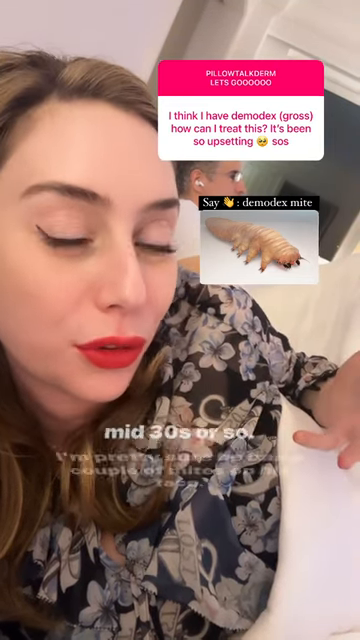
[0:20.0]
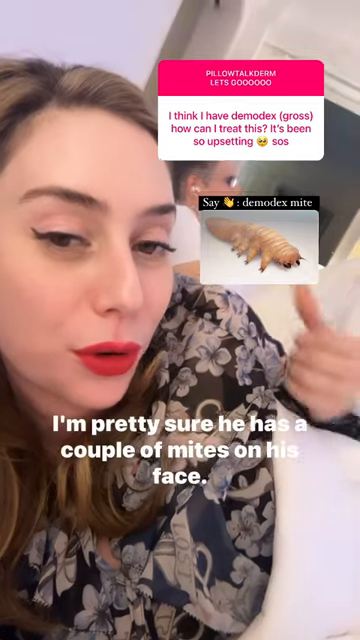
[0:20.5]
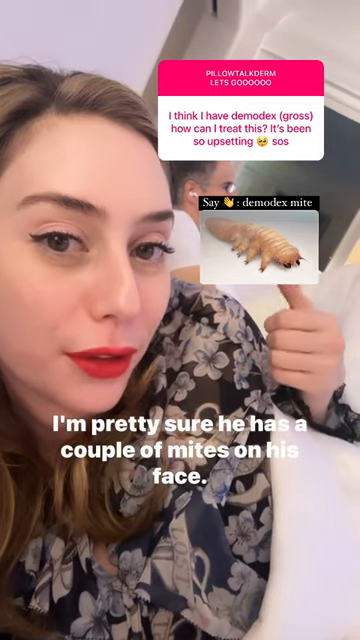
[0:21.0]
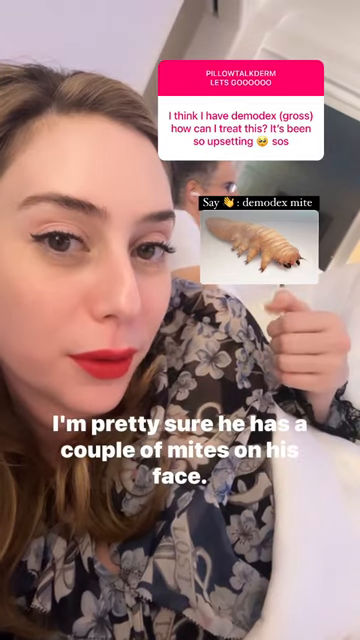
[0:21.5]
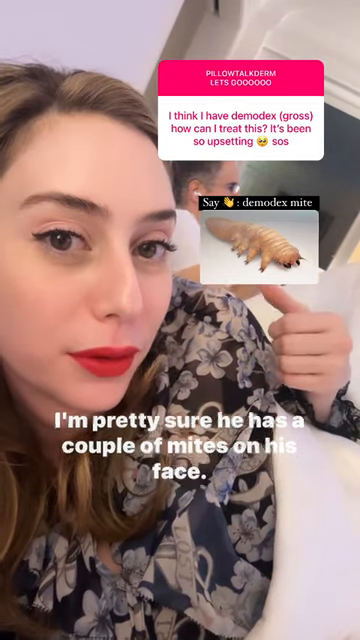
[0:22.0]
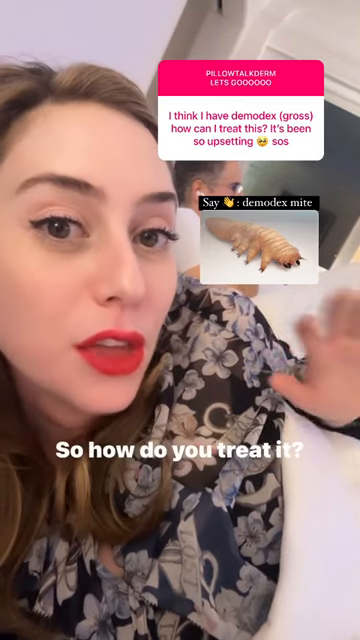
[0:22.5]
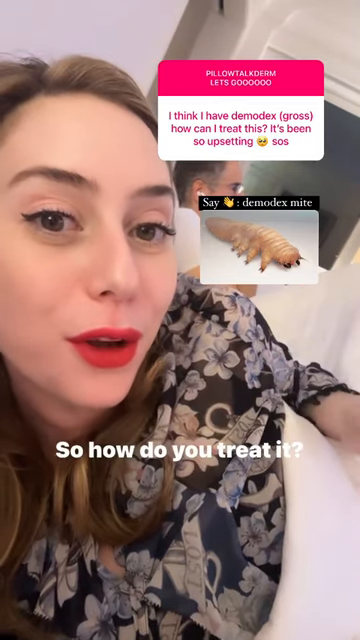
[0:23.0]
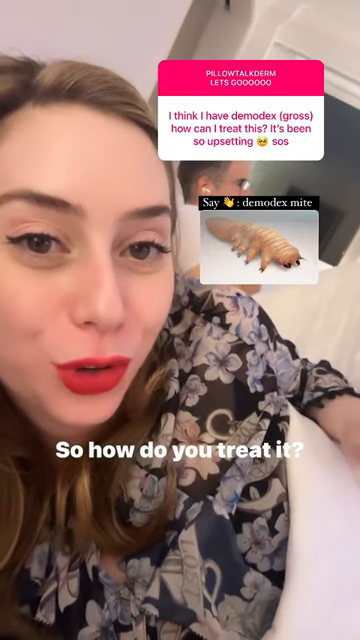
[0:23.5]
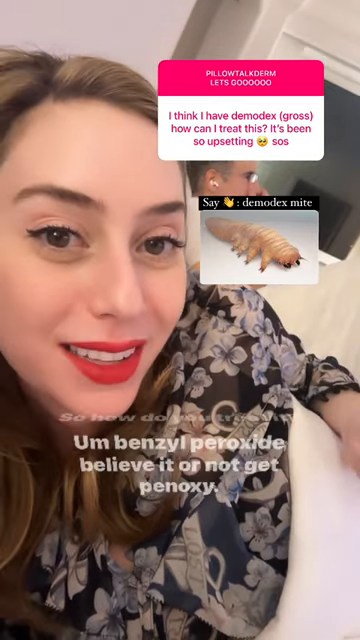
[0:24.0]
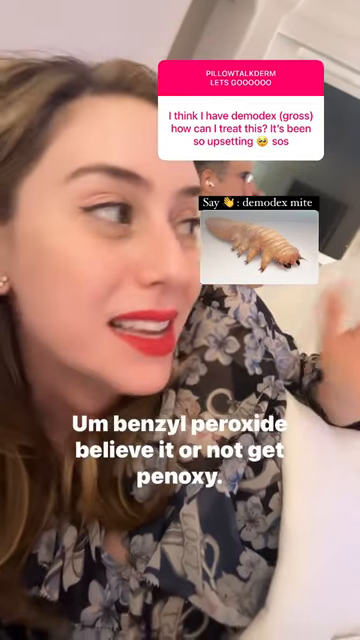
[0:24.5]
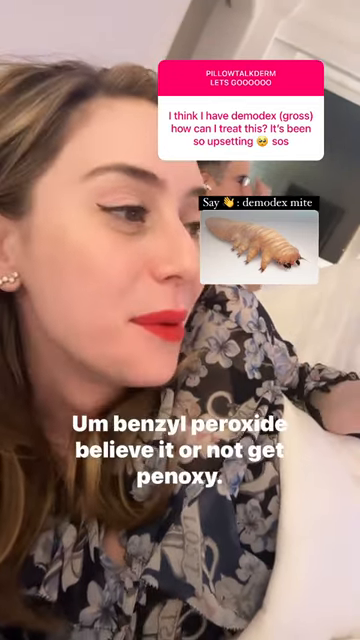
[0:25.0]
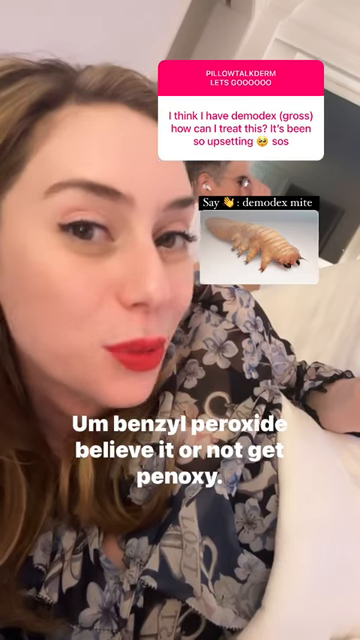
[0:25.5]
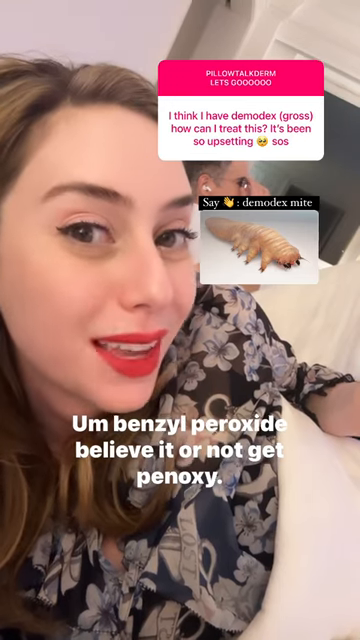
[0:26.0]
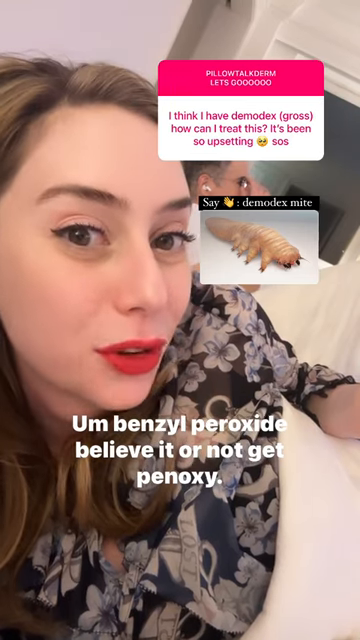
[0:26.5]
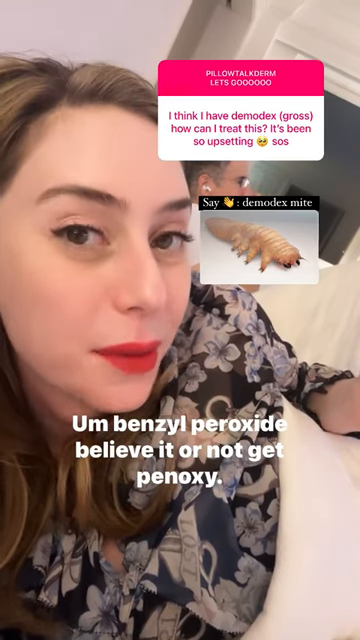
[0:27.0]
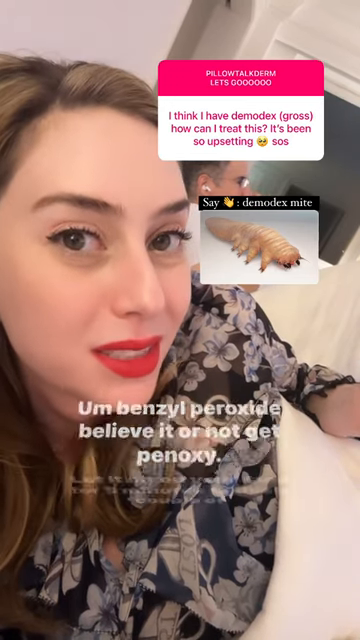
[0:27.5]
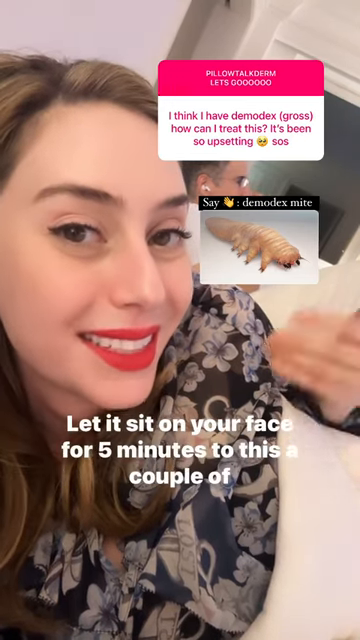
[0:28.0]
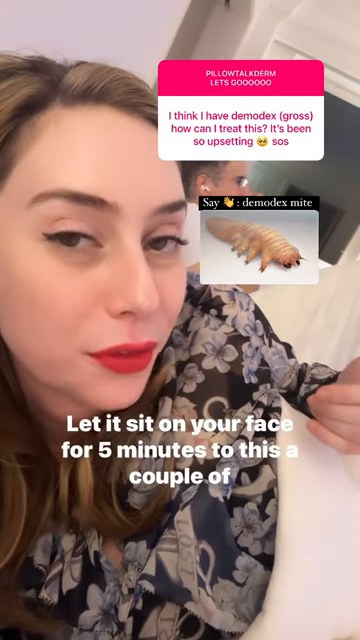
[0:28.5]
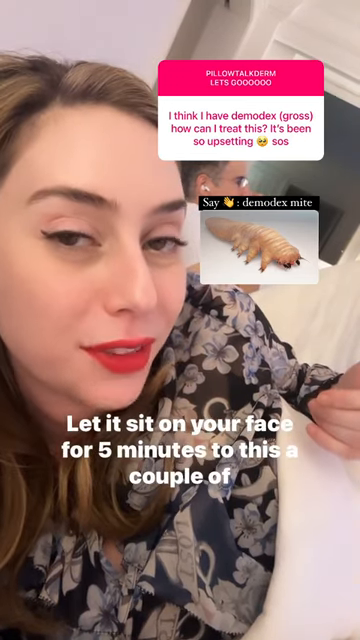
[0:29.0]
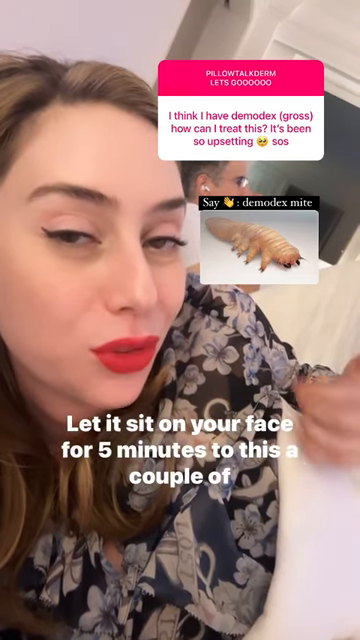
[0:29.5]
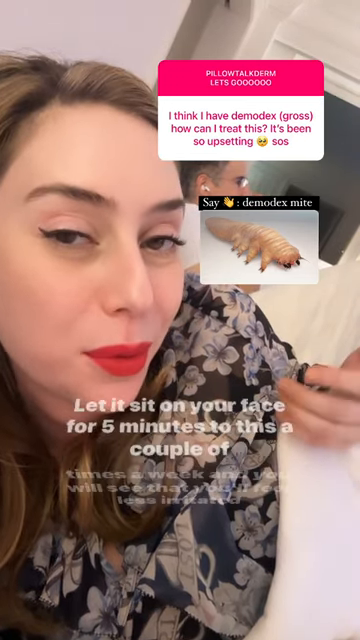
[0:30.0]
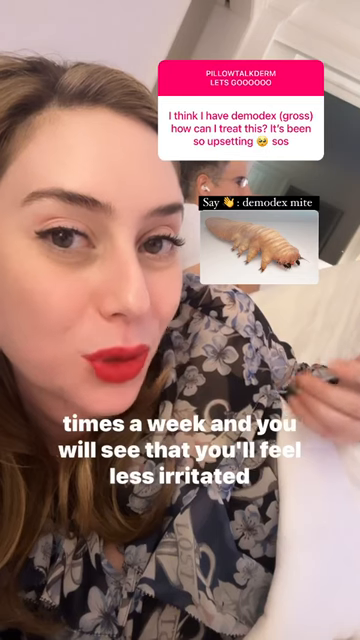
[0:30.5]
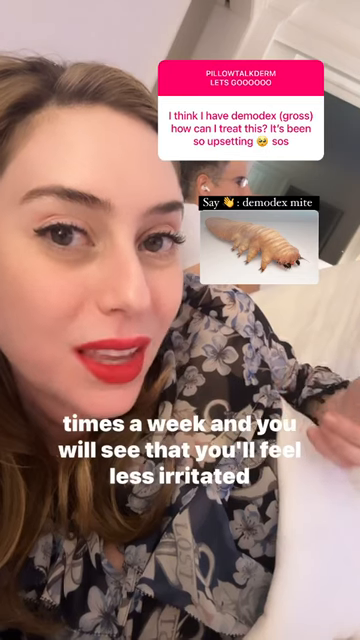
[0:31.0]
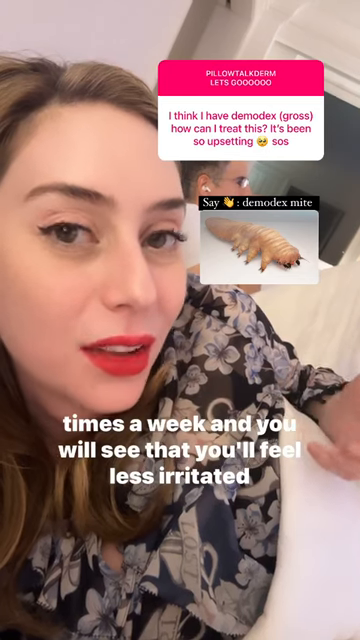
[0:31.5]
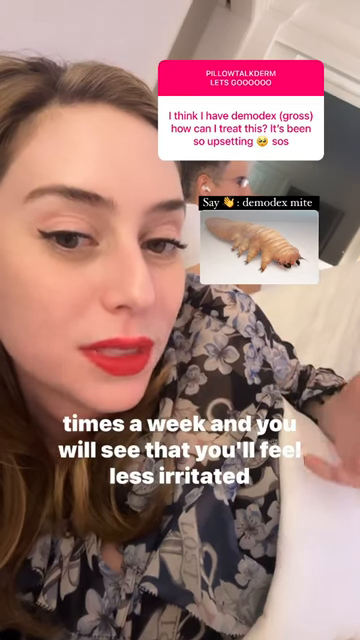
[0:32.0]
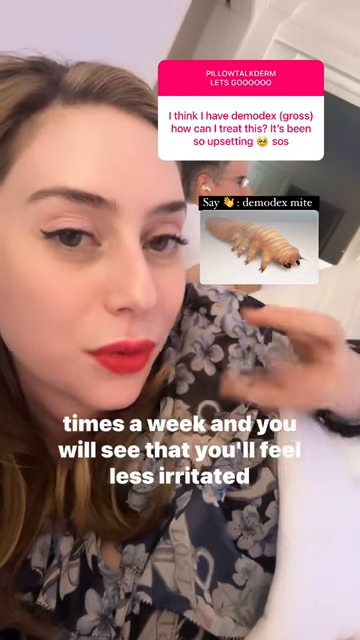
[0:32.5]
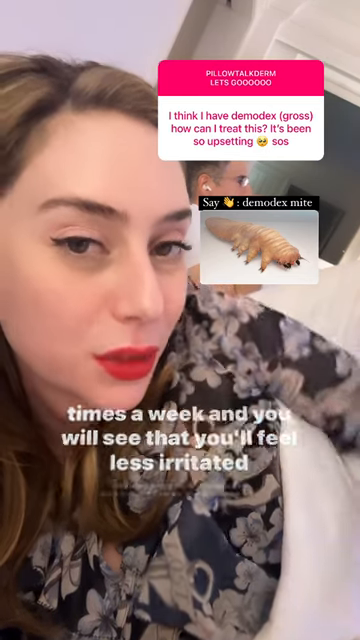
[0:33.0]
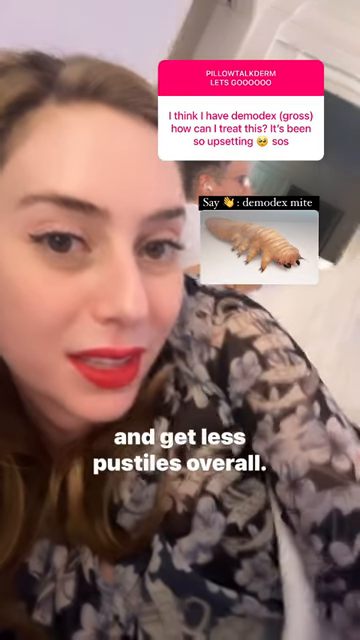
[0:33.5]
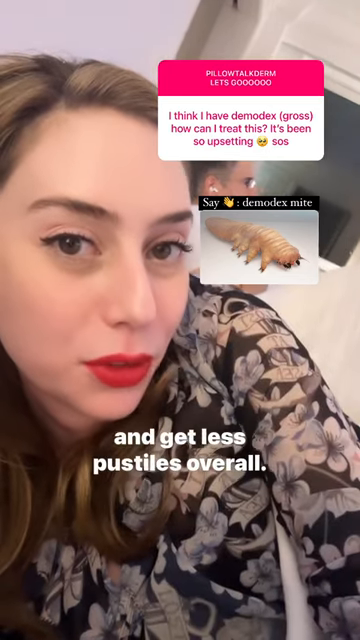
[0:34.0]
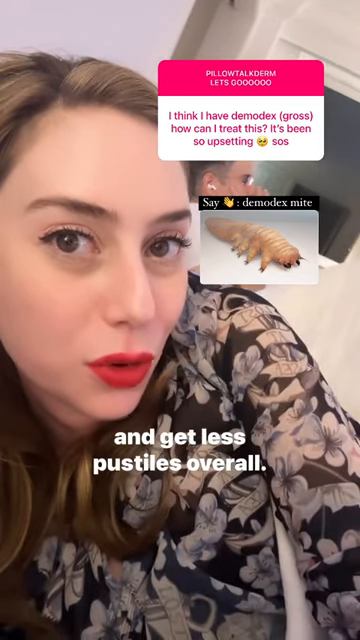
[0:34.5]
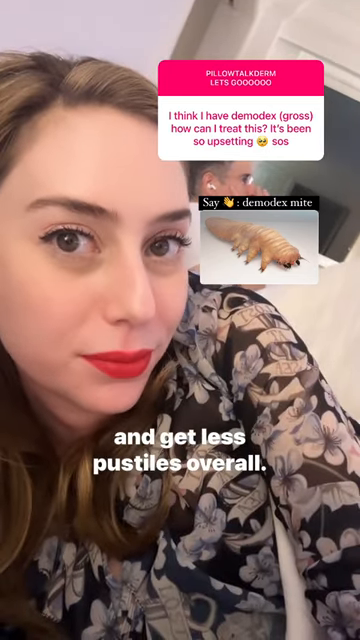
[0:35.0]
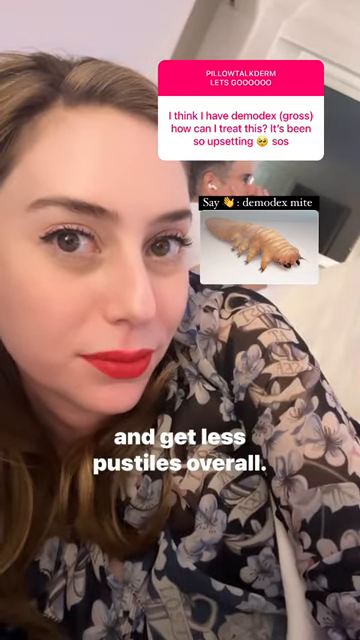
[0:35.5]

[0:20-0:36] A woman is talking on her phone. She says, "I'm pretty sure that all of us have this," and then, "so how do you treat it?" She says "benzoyl peroxide, believe it or not," and to let it sit on the face for five minutes and do this a couple of times a week for less irritation and fewer pustules overall. She also says, "I'm pretty sure he has a couple of mites on his face," and goes through different treatments, mentioning hydrogen peroxide and benzoyl peroxide. She has eye makeup done, kind of light brown hair, and dark red lipstick. A man is sitting back behind her, and some of the pop-ups kind of go over his face area.